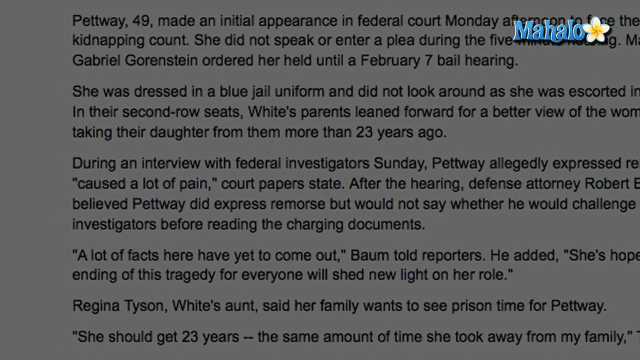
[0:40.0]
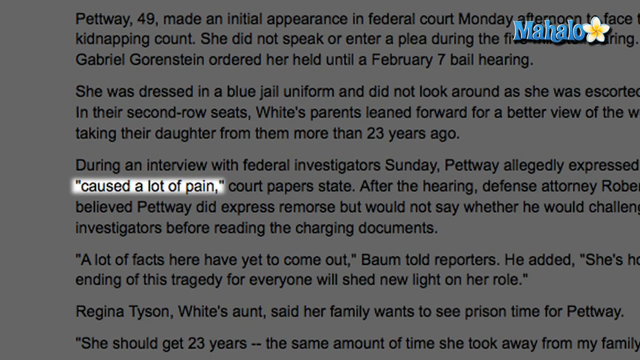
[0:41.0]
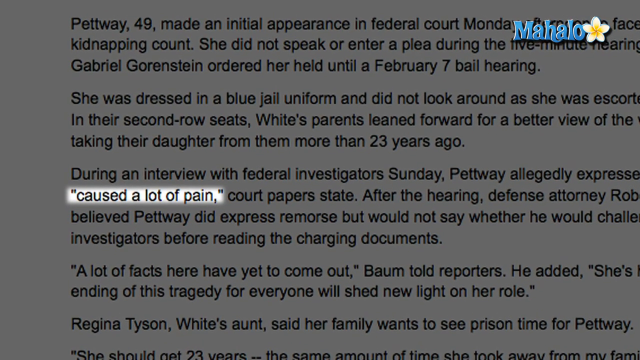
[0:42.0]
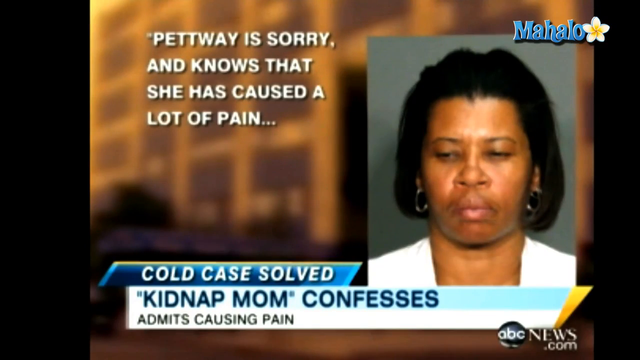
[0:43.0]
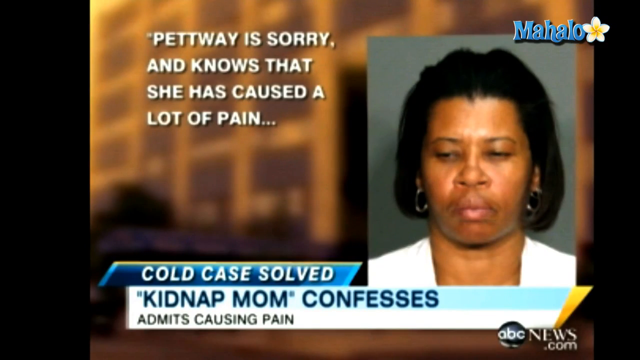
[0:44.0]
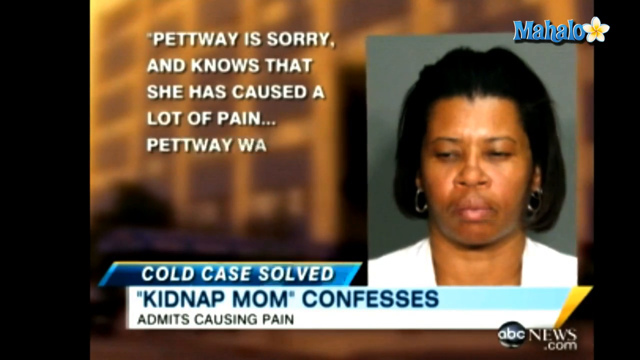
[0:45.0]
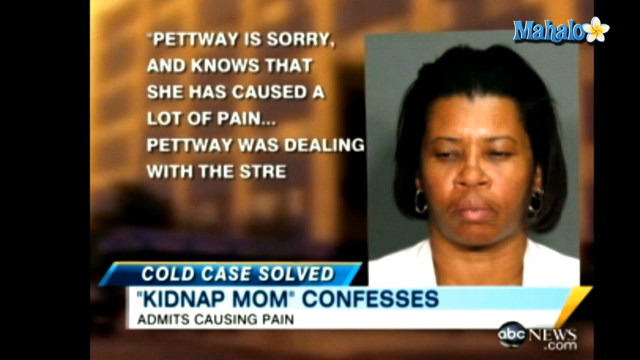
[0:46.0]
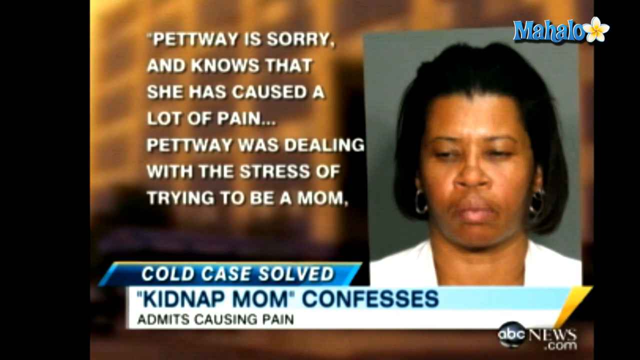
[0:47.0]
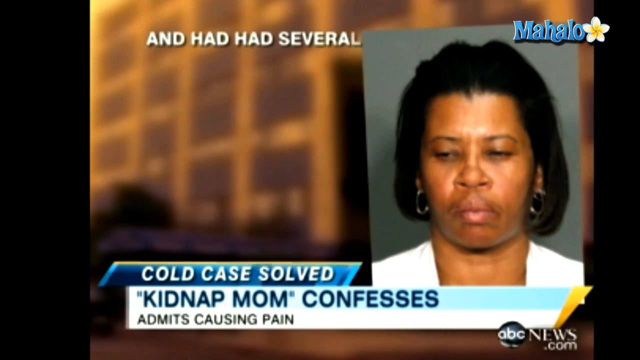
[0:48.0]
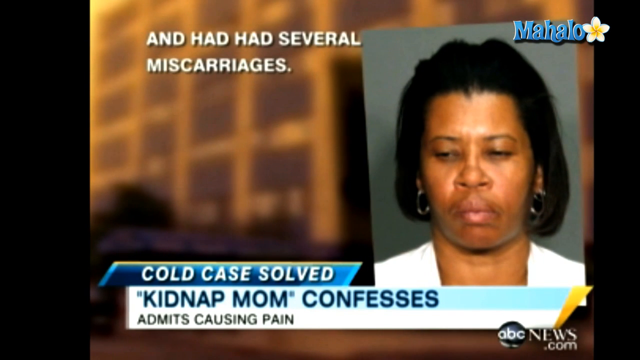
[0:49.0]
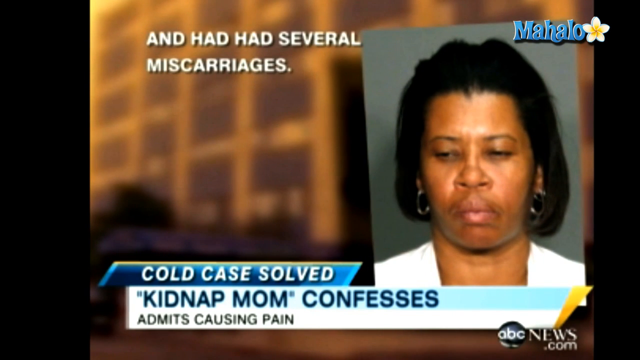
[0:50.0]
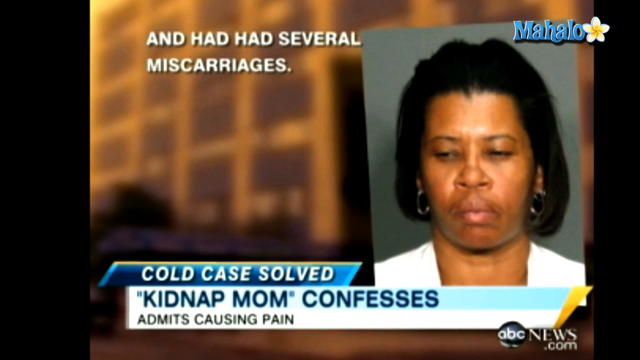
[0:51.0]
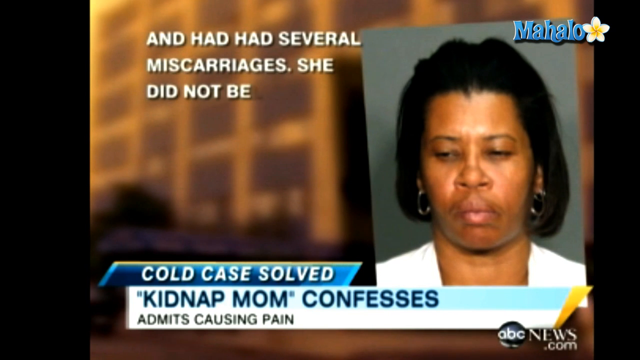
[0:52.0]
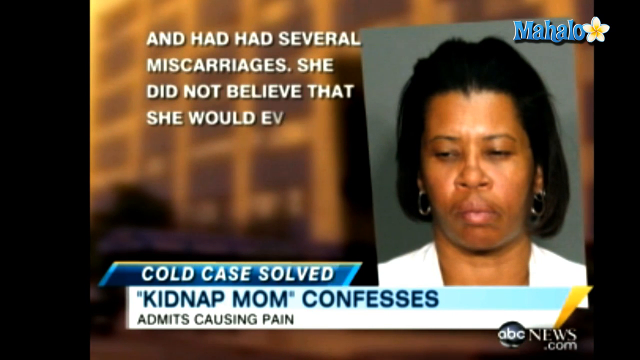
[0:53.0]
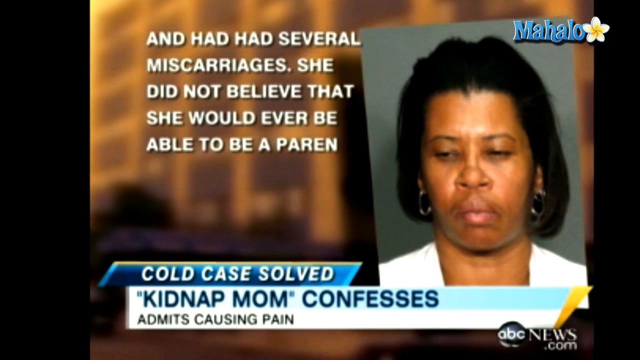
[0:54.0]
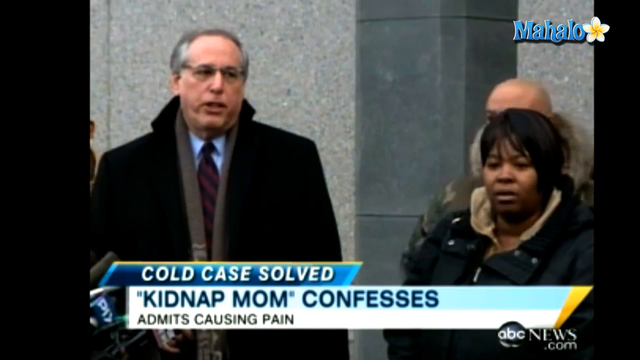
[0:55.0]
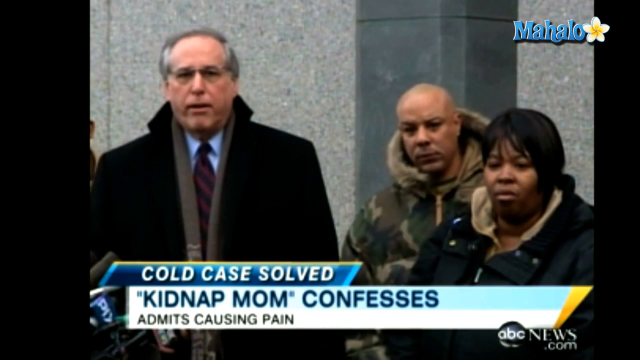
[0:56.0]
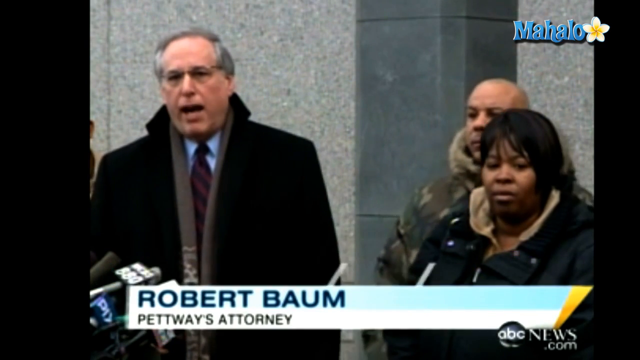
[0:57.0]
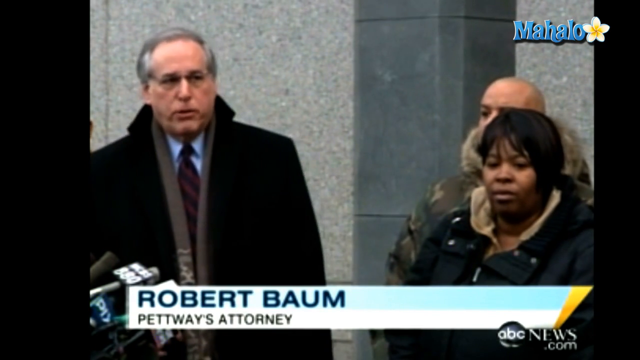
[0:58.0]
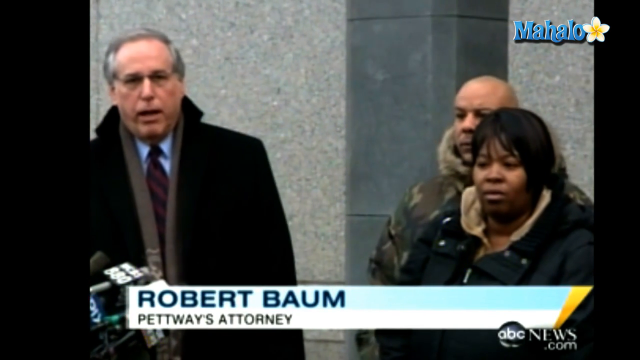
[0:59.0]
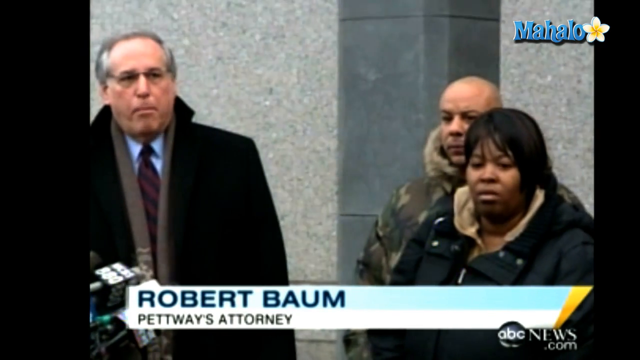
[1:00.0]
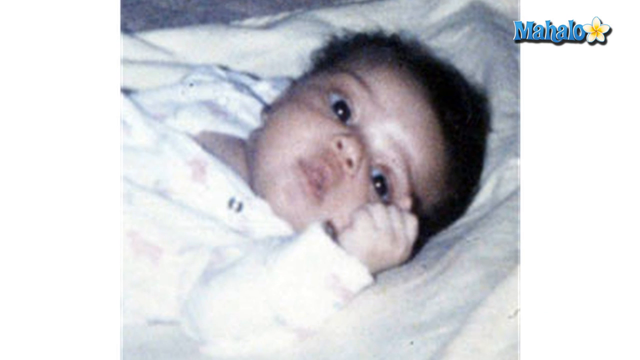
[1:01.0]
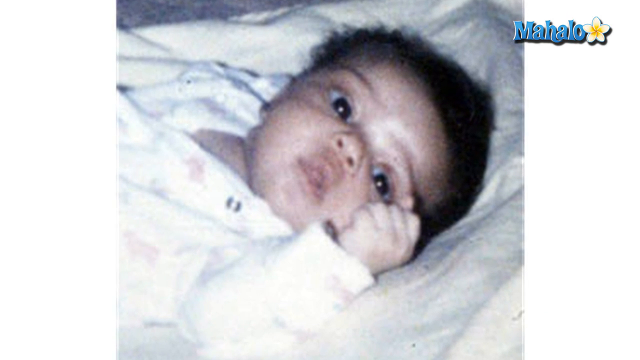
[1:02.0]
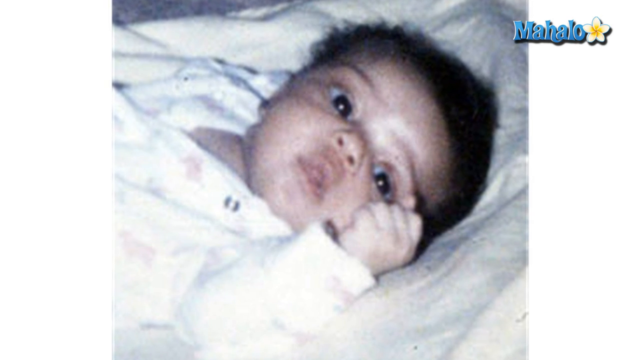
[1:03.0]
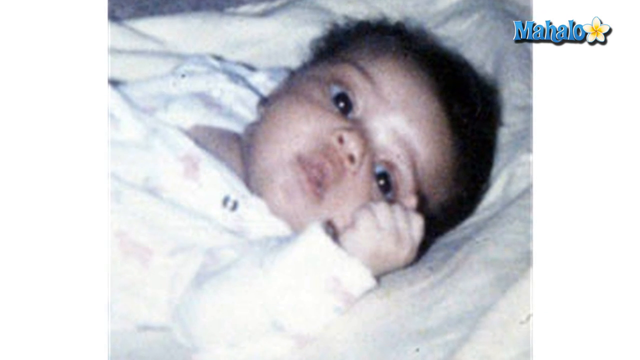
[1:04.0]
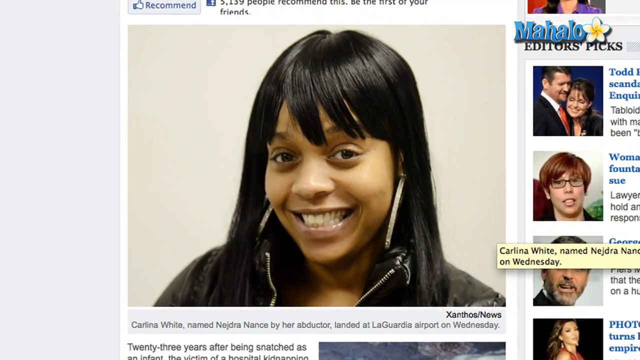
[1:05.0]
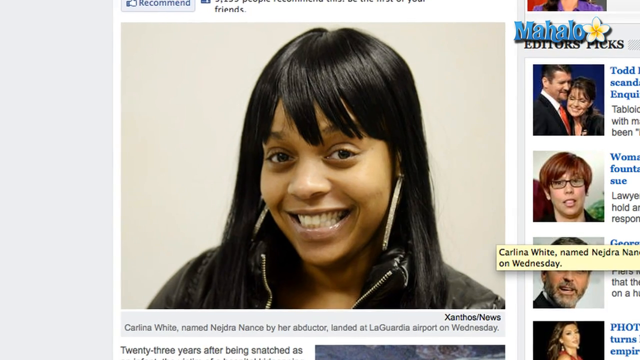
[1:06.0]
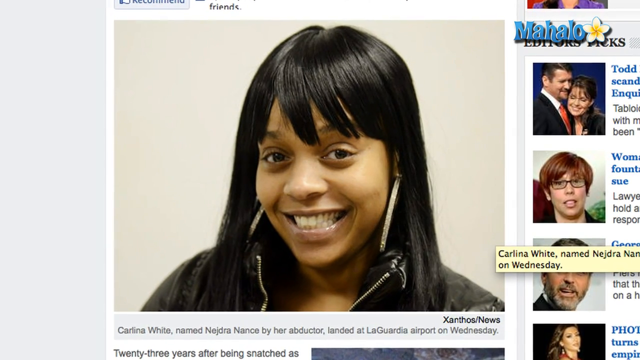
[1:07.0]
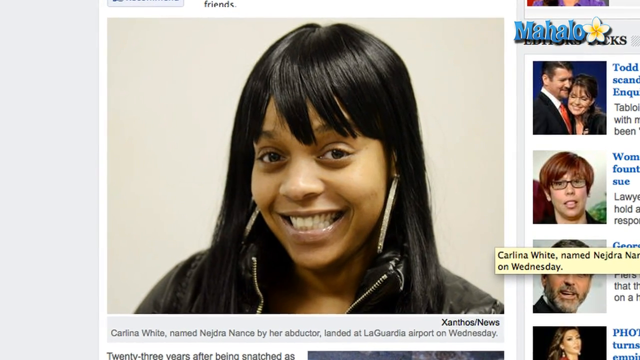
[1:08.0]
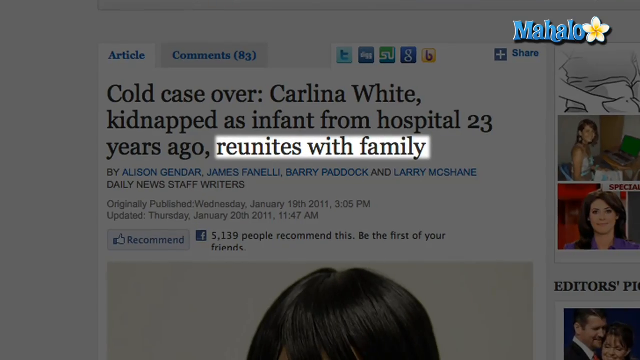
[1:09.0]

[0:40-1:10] A screenshot of a website article with lots of text is shown; most of the text is shaded, while one section is highlighted with a white background and black text reading "caused a lot of pain". The scene shifts to what looks to be TV news coverage showing a photograph of the same woman, Pettway, with text to the left of her reading "Pettway is sorry and knows that she has caused a lot of pain. Pettway was dealing with the stress of trying to be a mom". The quote to the left of her photograph continues: "and had had several miscarriages. She did not believe that she would ever be able to be a parent." The scene then shifts back to video footage of the man talking to a group of microphones, again standing outside a building and wearing a jacket and tie. Next to him are two other people, also wearing jackets. The text at the bottom reads "Cold case solved. Kidnap mom confesses."